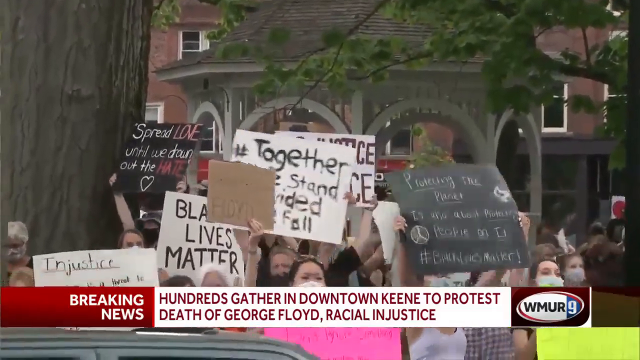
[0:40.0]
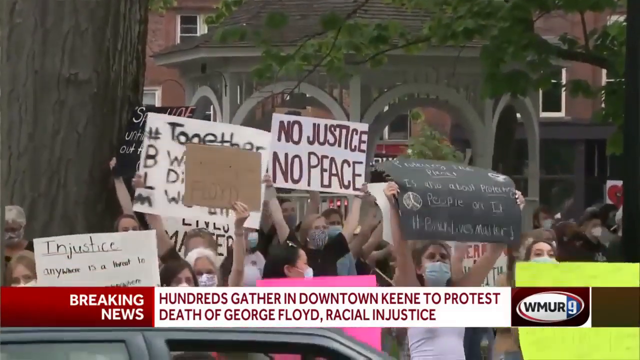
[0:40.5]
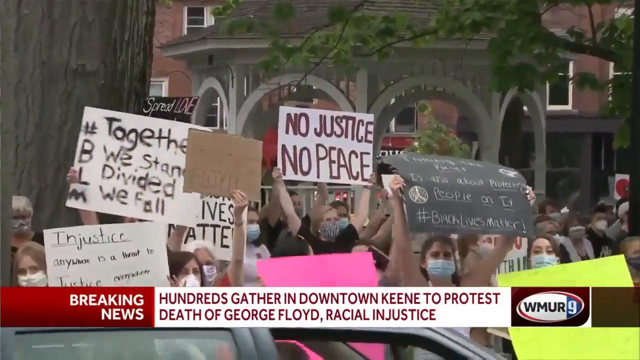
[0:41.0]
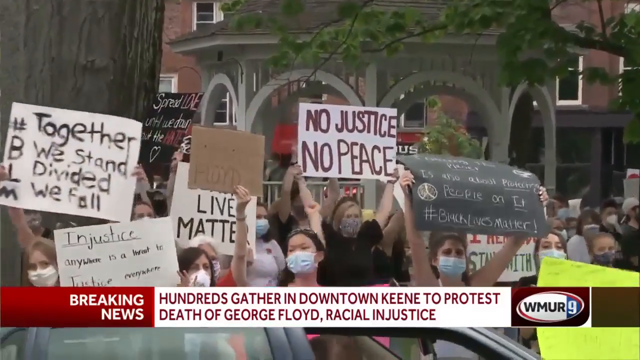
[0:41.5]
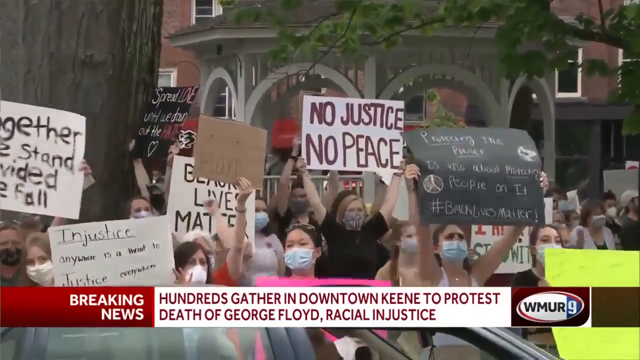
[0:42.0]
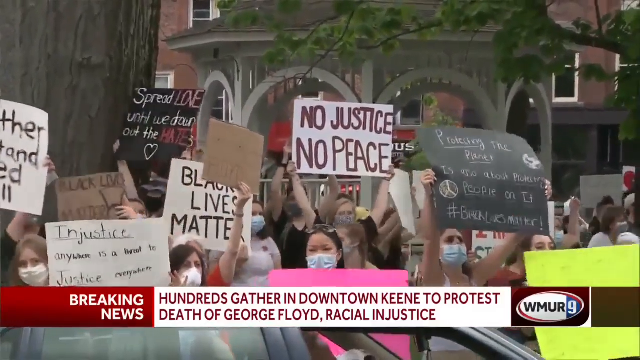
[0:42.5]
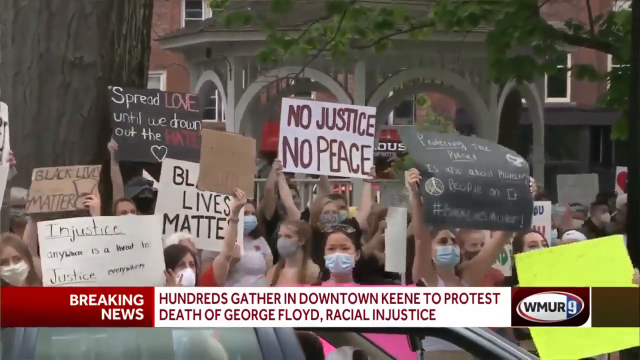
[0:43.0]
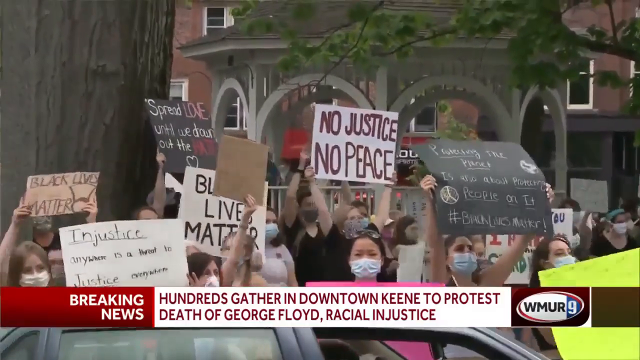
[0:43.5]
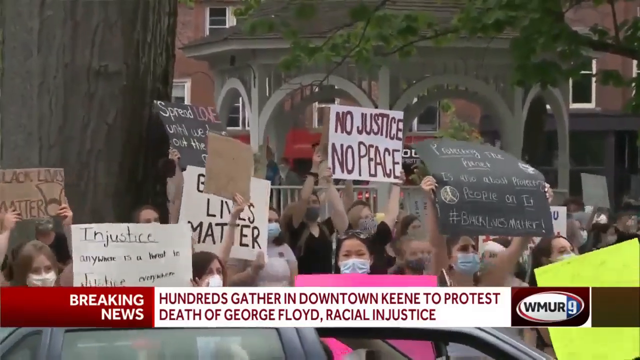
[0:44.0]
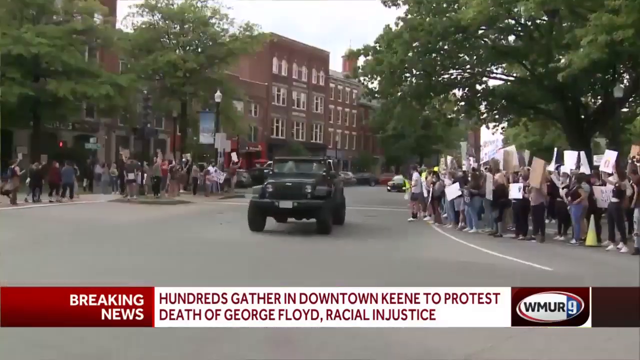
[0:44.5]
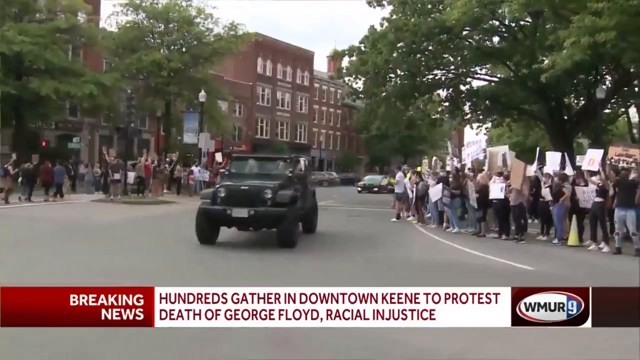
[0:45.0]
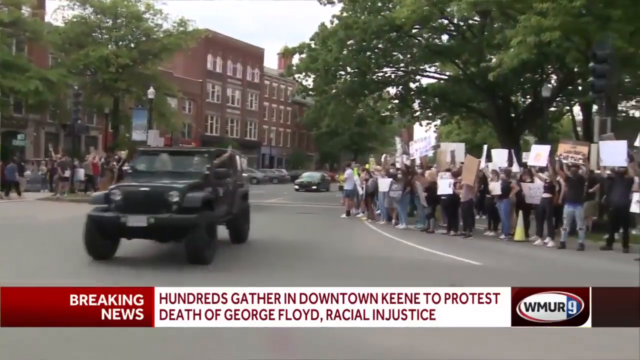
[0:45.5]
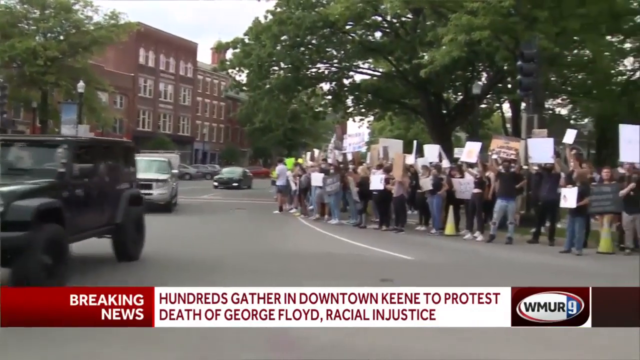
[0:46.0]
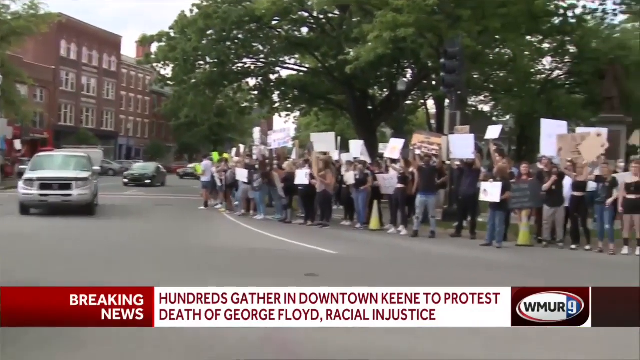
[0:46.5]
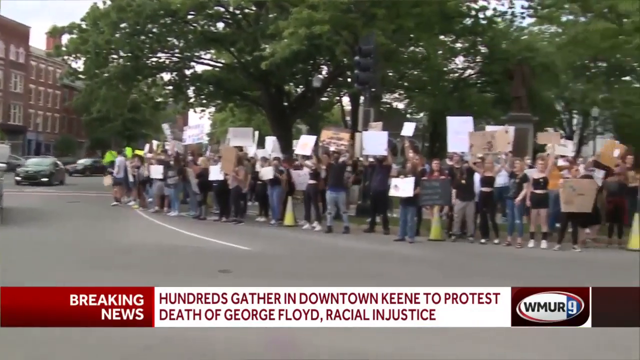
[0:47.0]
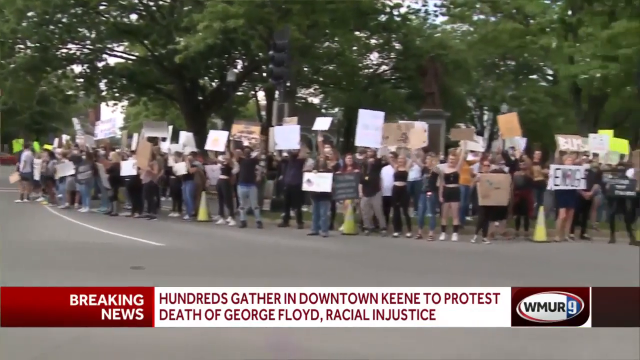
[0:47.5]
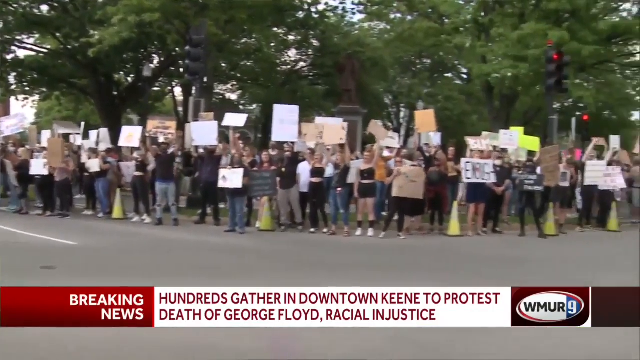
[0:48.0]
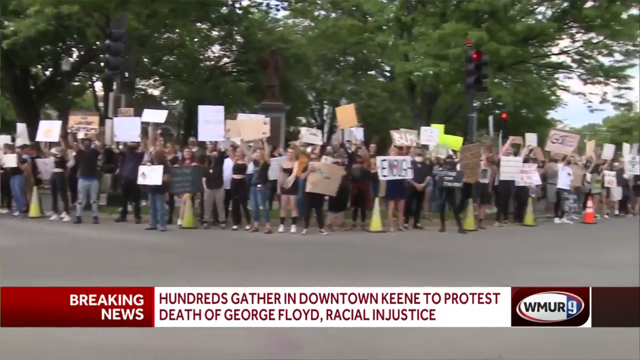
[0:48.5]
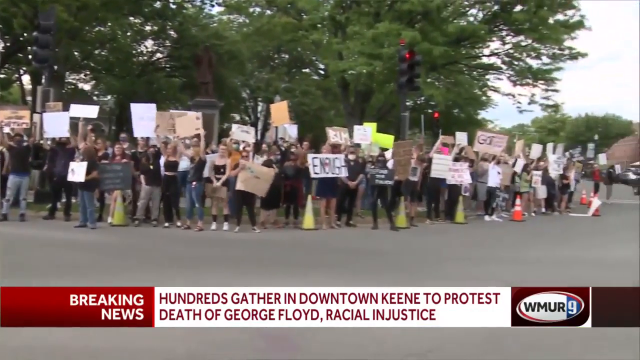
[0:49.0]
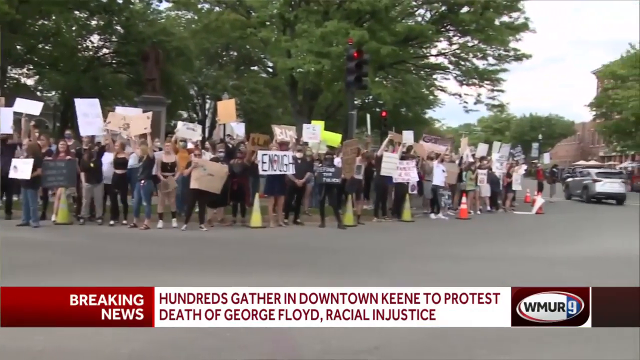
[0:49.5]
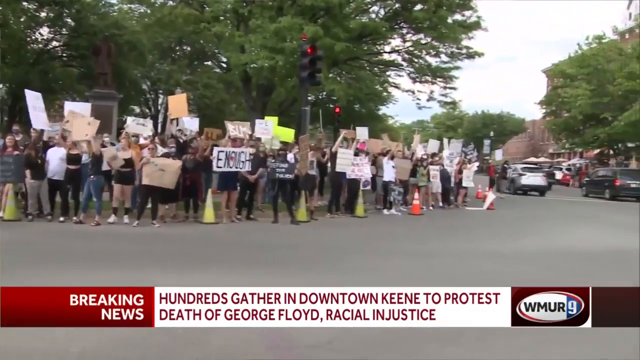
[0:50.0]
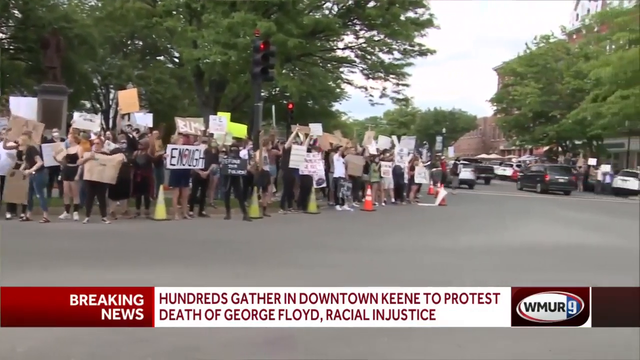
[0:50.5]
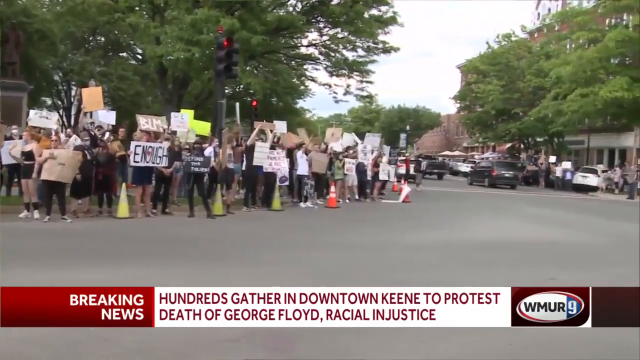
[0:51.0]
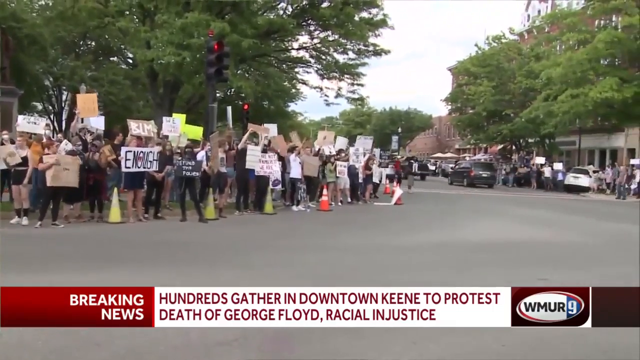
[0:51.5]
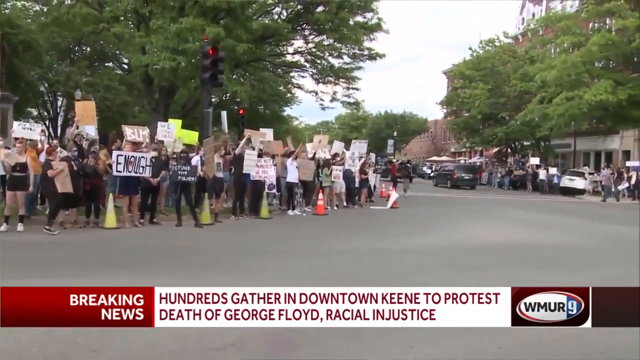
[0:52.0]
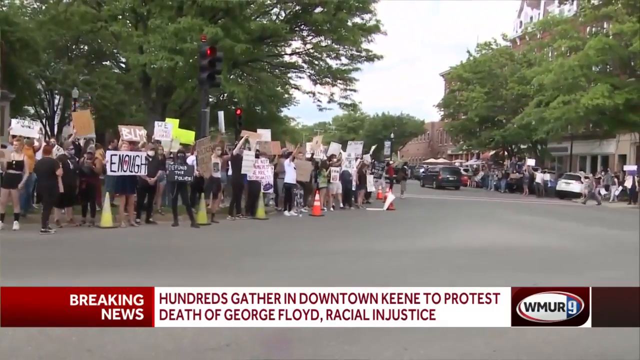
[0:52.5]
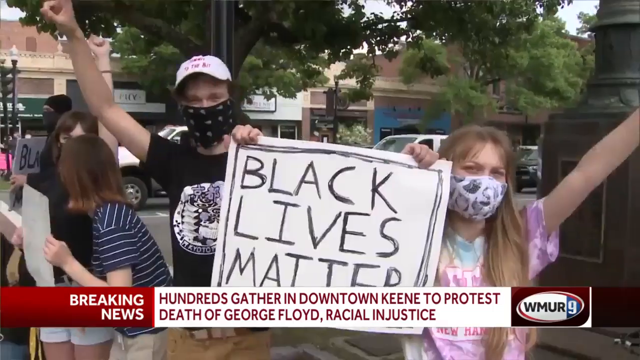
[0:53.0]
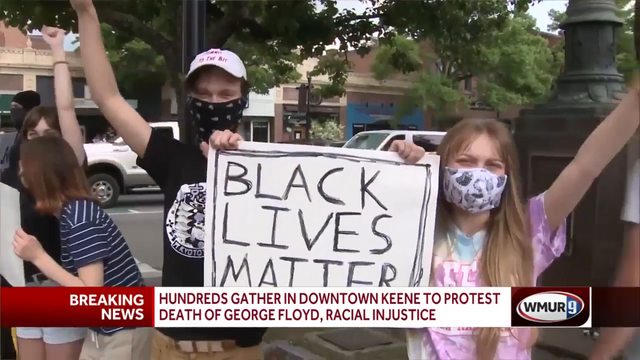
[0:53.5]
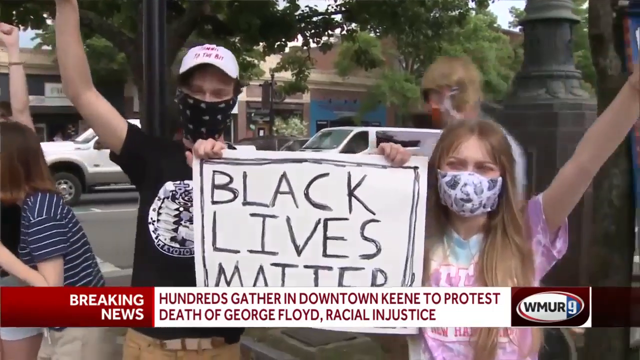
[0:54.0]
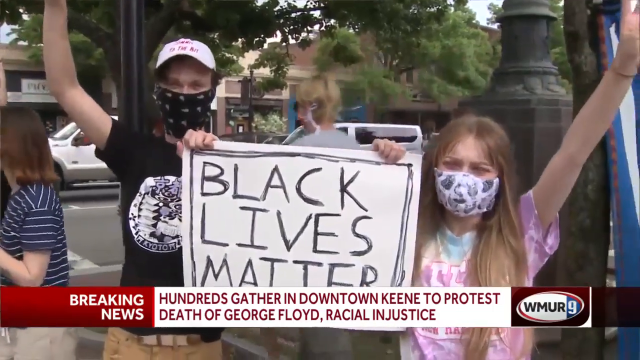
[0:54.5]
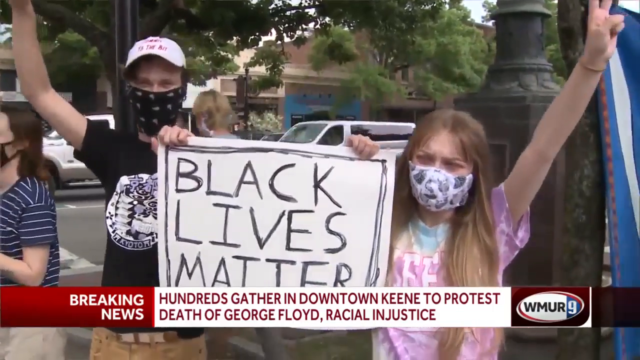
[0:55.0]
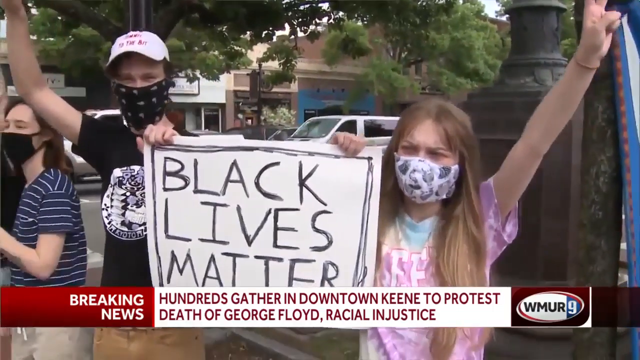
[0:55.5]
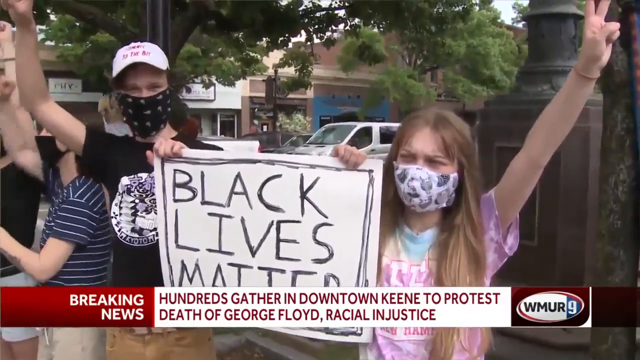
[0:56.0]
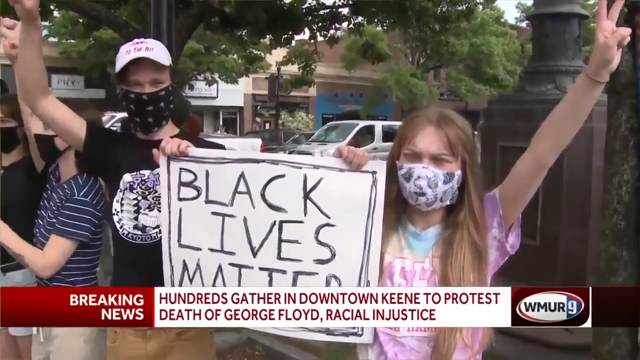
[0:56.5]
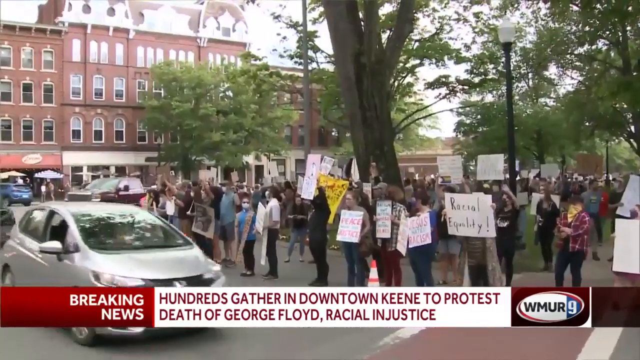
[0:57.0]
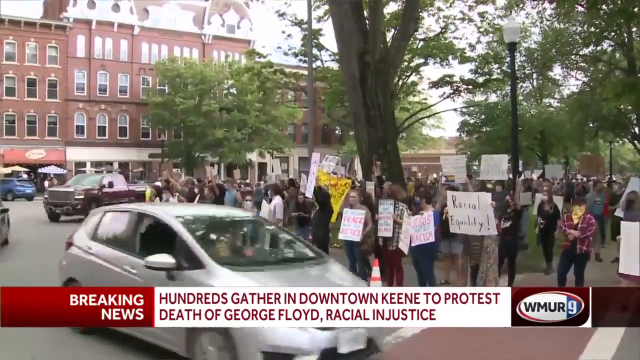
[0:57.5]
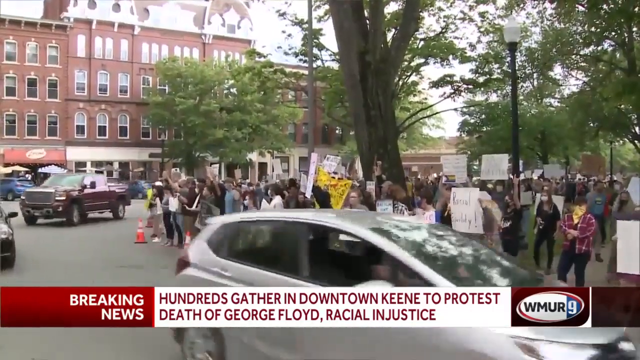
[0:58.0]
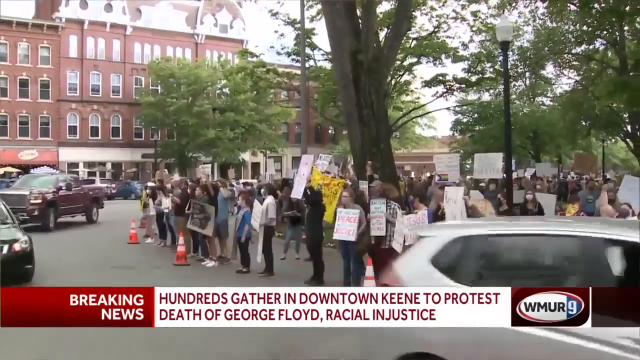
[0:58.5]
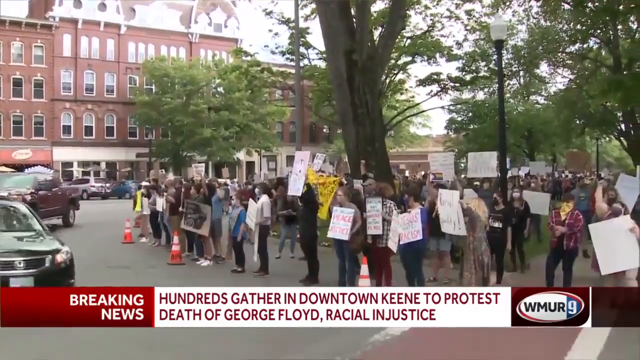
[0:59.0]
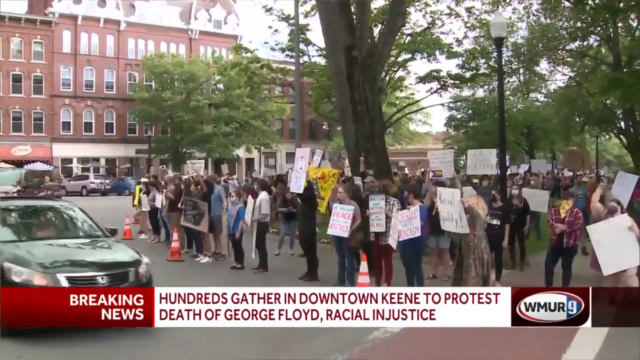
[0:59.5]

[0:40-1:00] Protesters on the roadside in King protest the police officer who killed George Floyd, with messages saying "justice delayed is justice denied," "silence is violence," "enough is enough," "Black Lives Matter" and "spread love until we drown out the hate." Many of the protesters are white people.